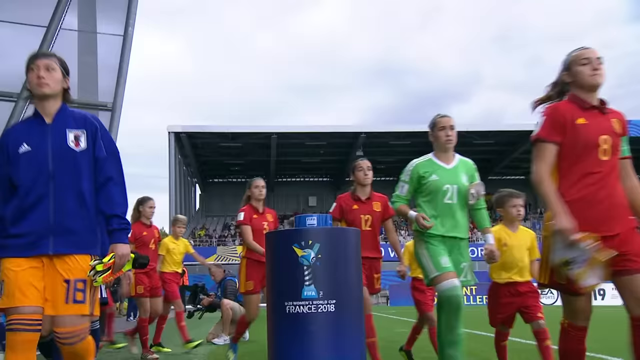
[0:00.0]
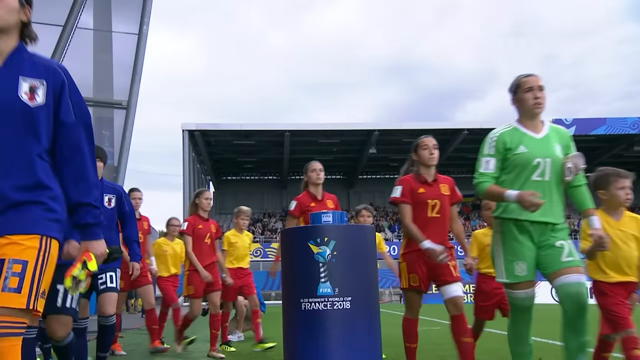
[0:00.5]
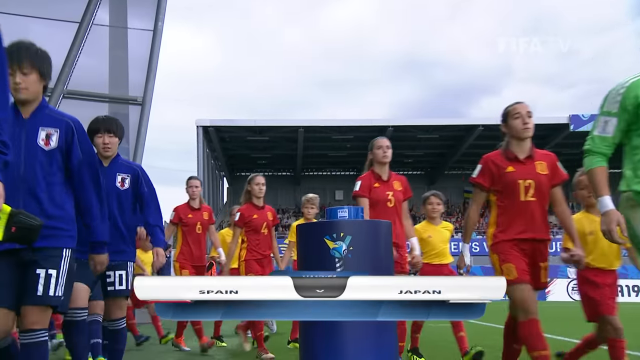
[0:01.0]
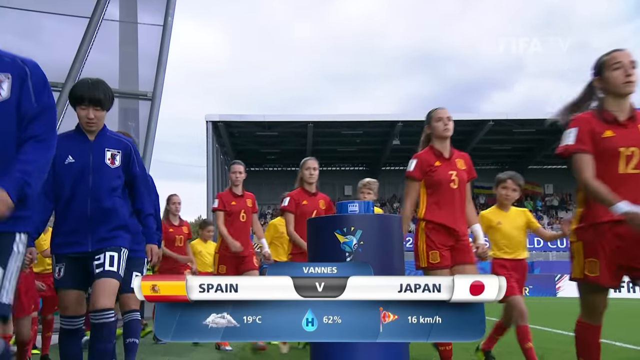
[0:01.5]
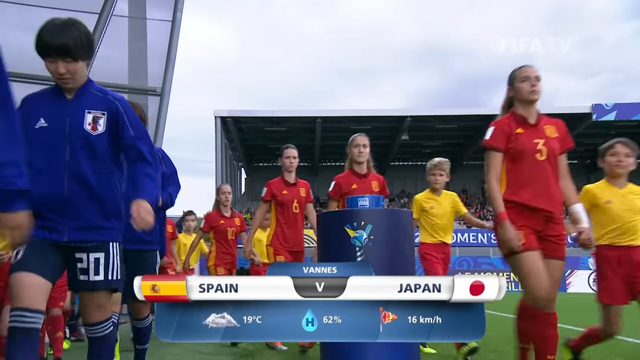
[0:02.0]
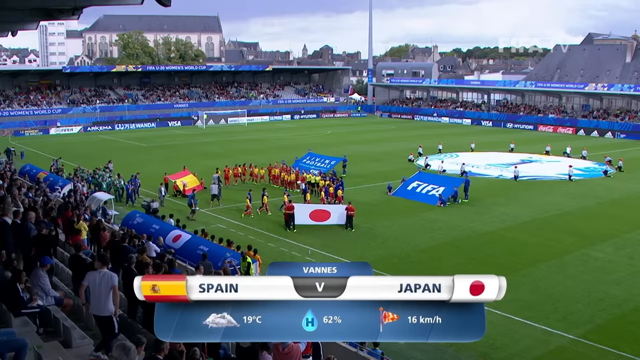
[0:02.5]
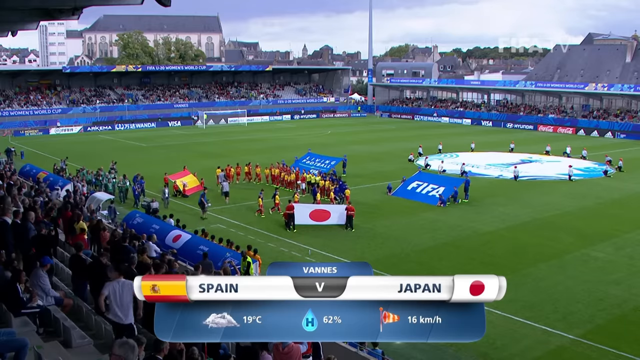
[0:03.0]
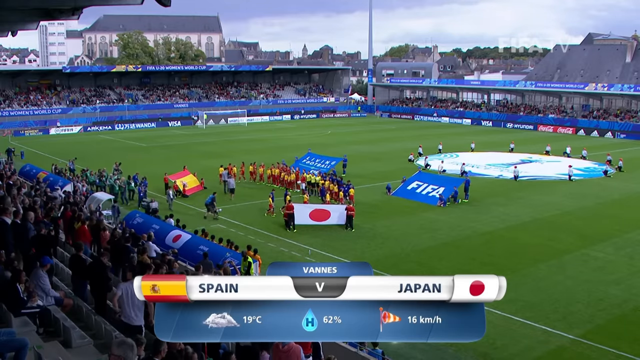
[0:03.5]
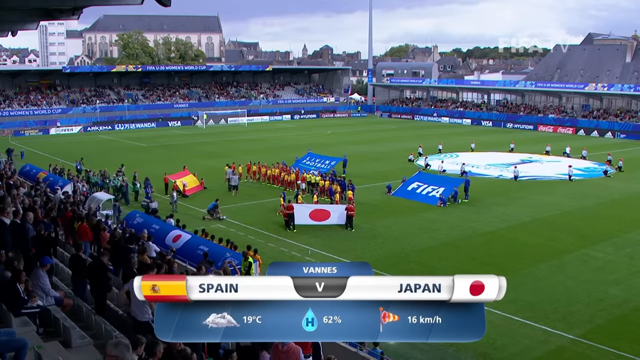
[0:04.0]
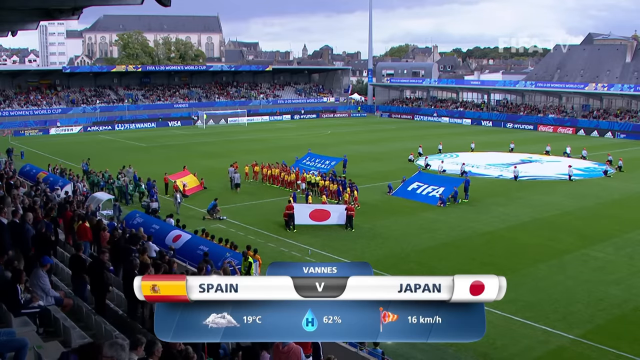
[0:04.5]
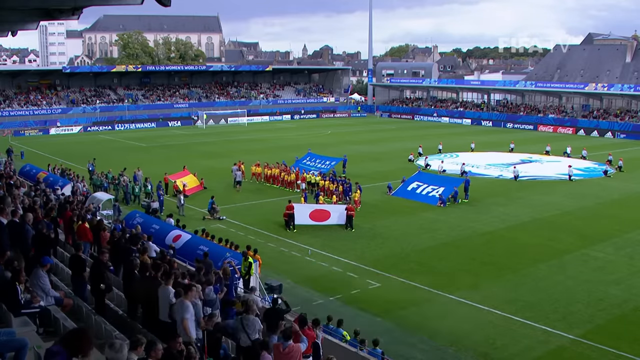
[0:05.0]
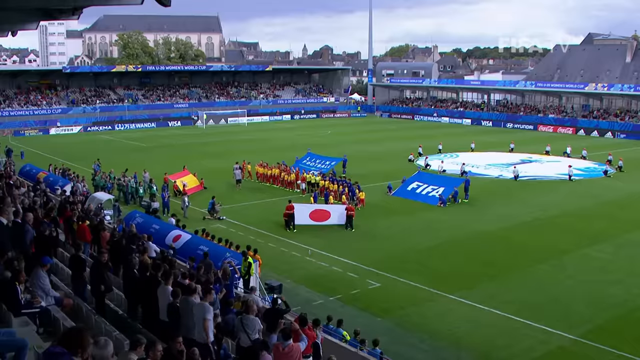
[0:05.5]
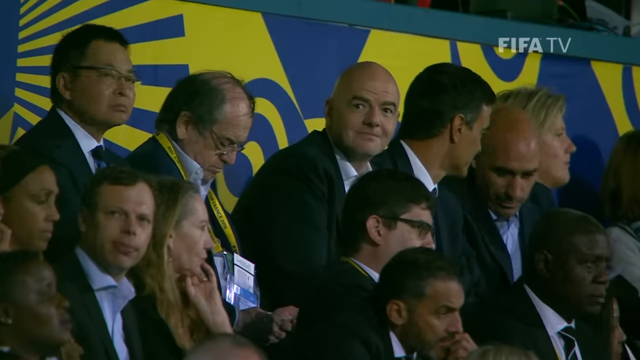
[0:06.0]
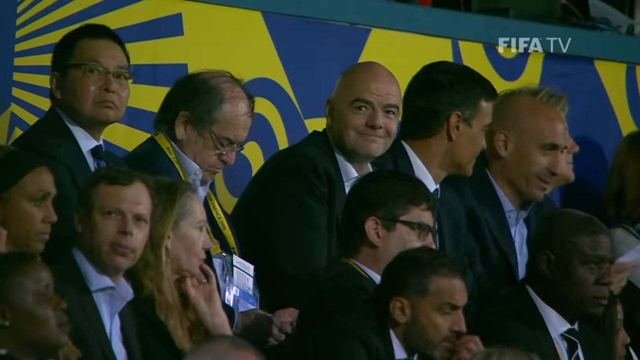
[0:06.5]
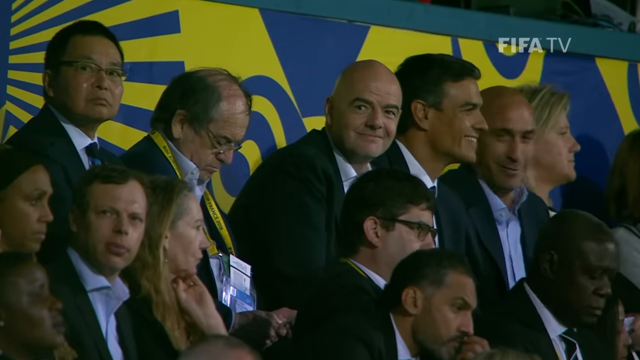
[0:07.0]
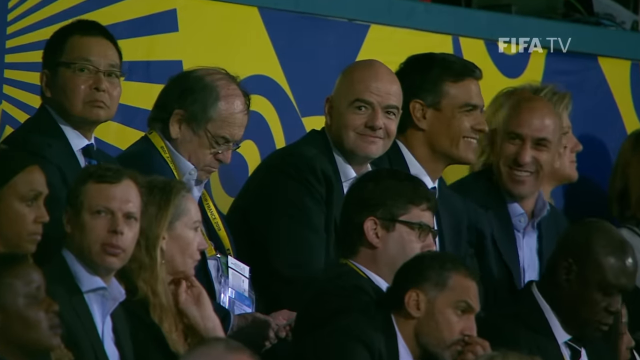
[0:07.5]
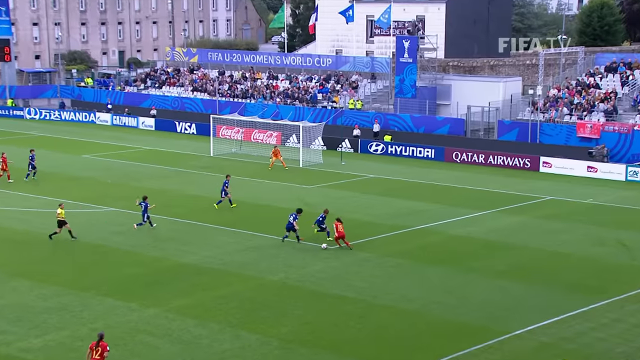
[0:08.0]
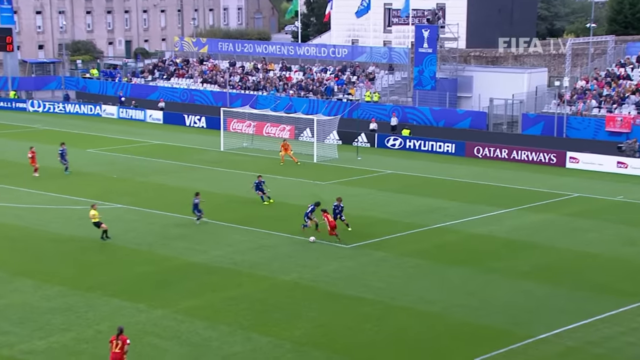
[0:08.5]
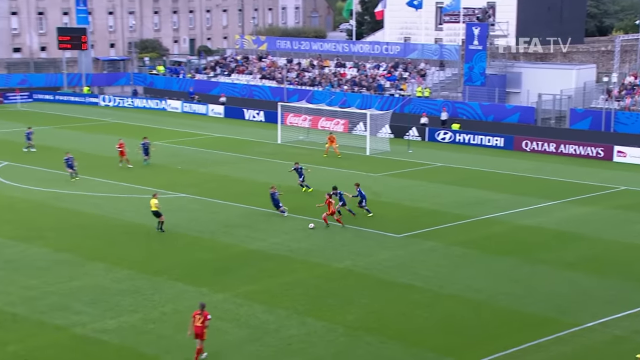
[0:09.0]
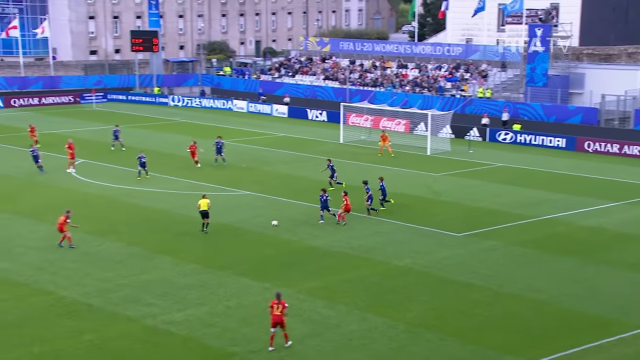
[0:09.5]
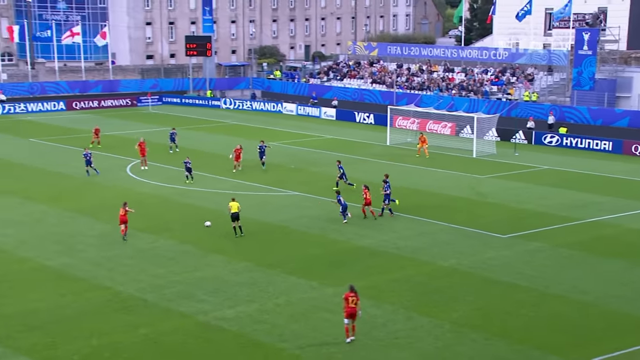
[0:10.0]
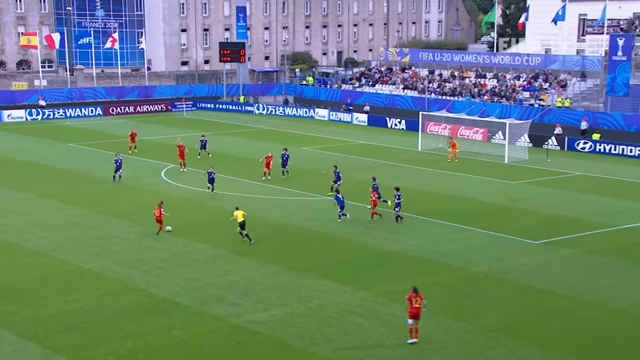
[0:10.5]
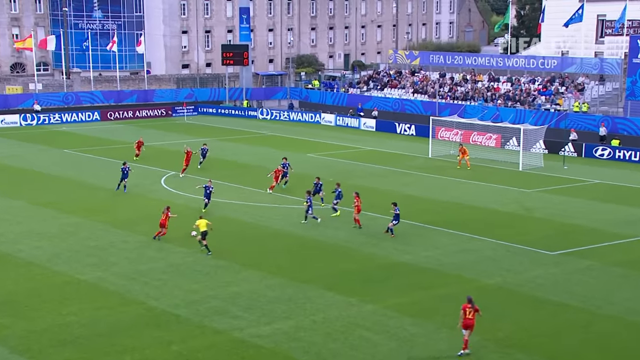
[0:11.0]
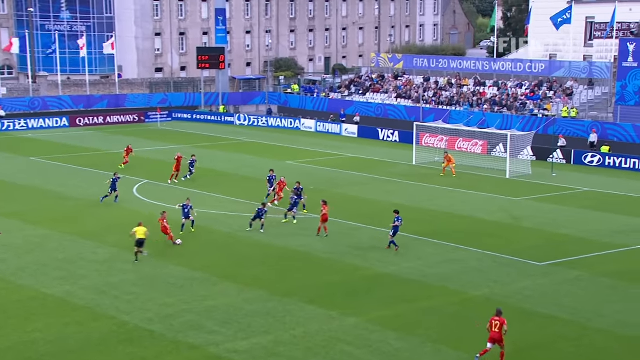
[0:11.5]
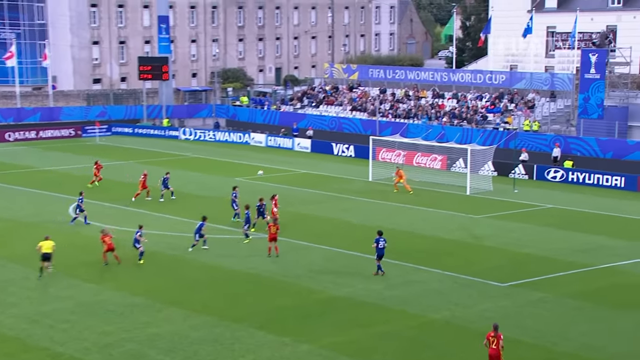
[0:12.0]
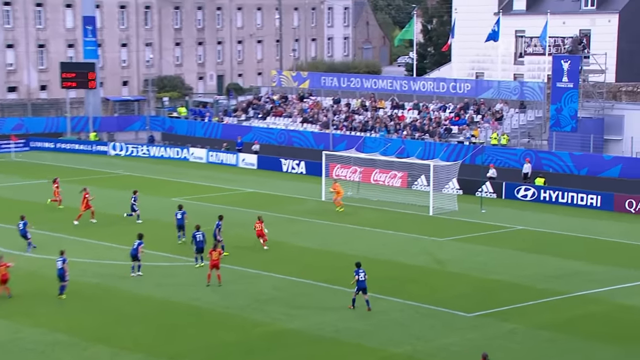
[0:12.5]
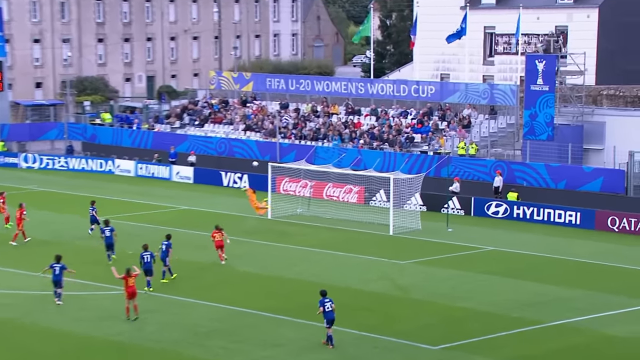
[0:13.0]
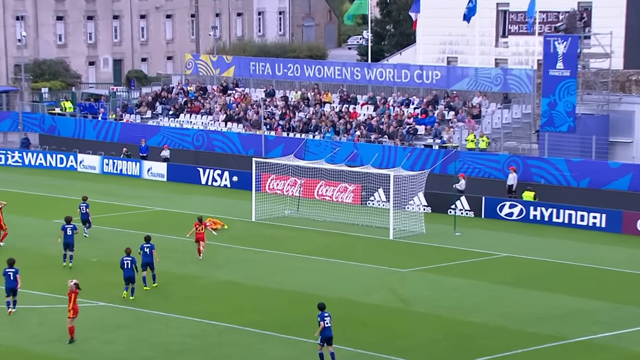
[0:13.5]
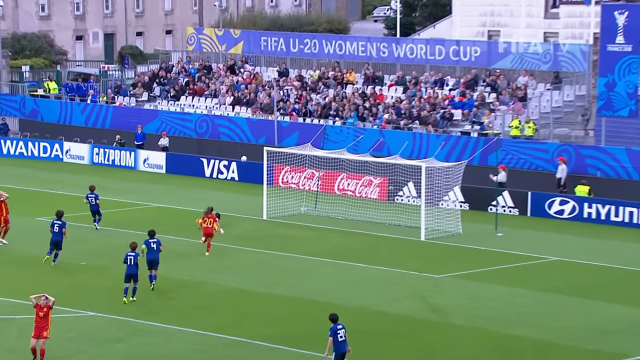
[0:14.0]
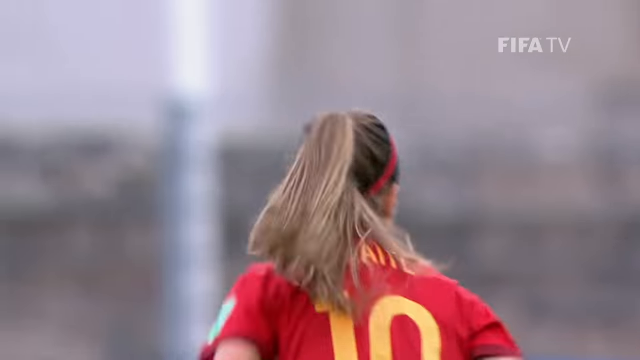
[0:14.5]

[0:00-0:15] The video shows the final of the 2018 FIFA U-20 Women's World Cup, Spain versus Japan. The women's team looks very young. There is a lot of scoring, four goals in all: Japan scores three and Spain one. The Japanese wear blue uniforms and the Spanish wear orange uniforms, and they are all running around. At the end the Japanese players are together, jumping up and down and waving, while a lot of confetti falls from the sky. The game is in a stadium.